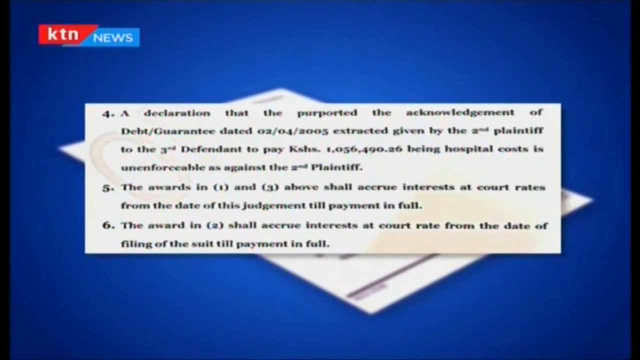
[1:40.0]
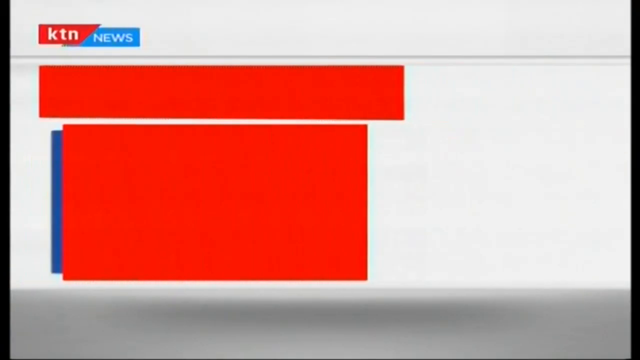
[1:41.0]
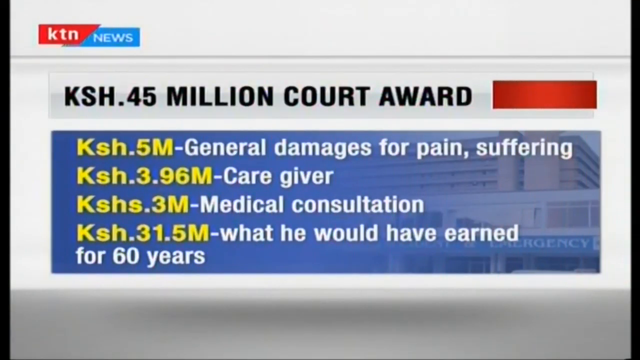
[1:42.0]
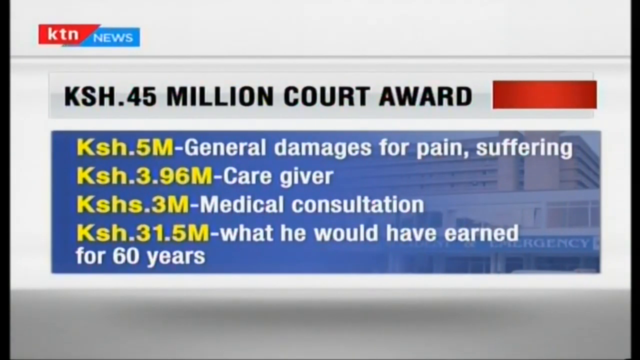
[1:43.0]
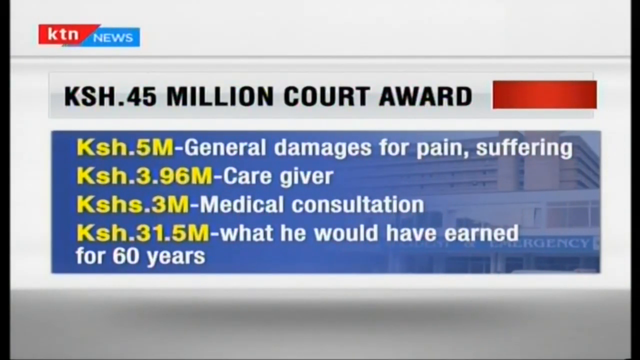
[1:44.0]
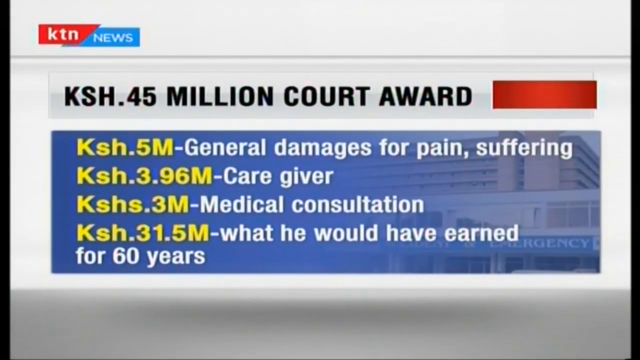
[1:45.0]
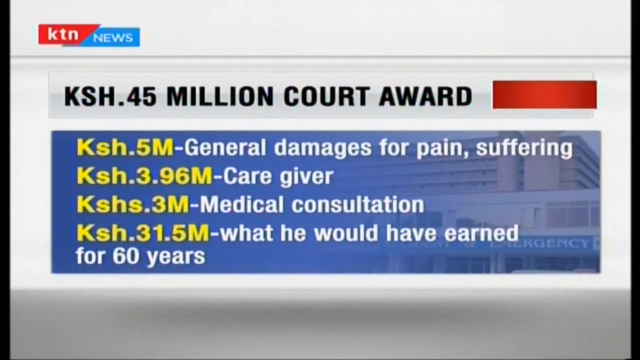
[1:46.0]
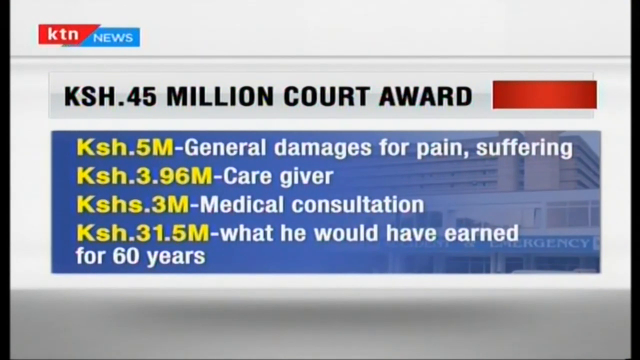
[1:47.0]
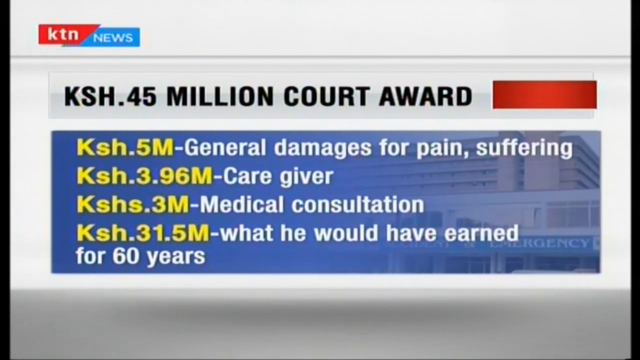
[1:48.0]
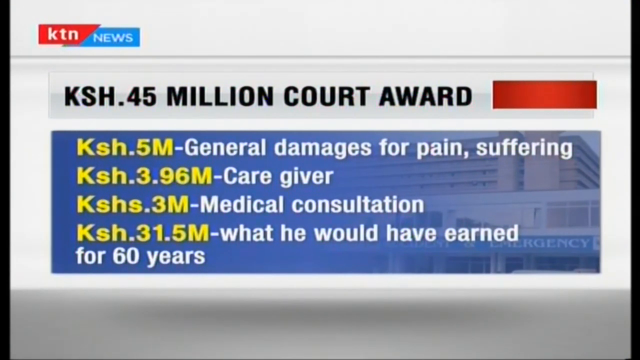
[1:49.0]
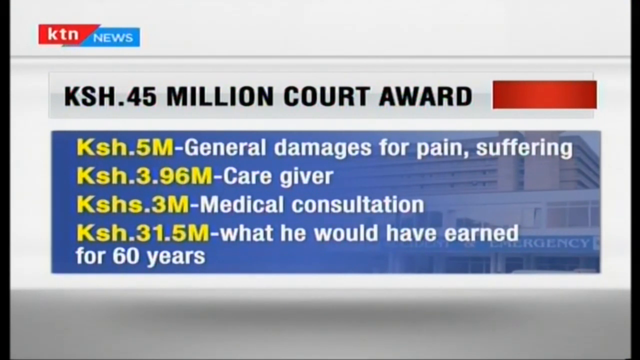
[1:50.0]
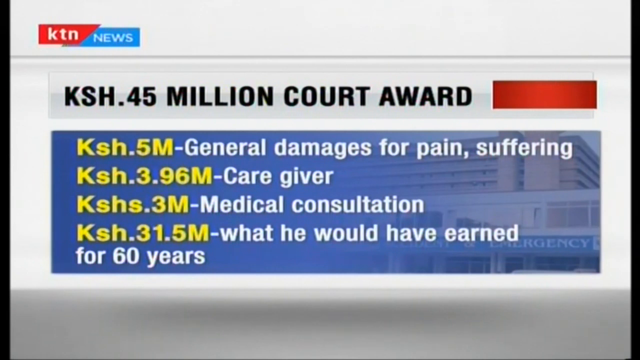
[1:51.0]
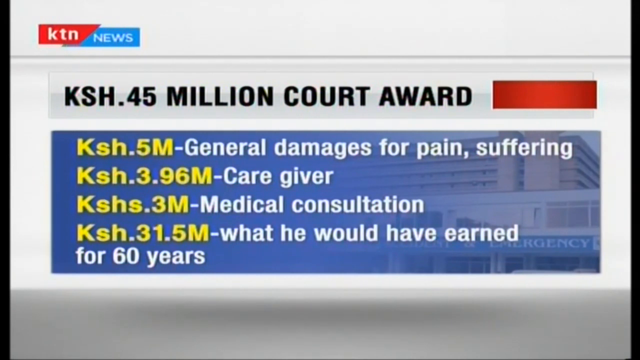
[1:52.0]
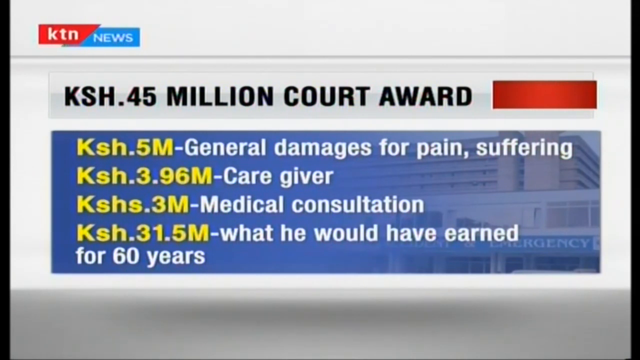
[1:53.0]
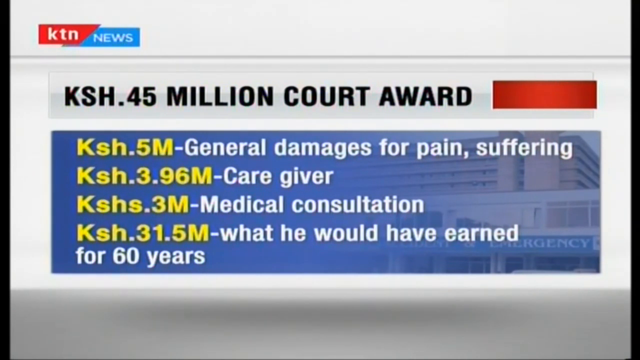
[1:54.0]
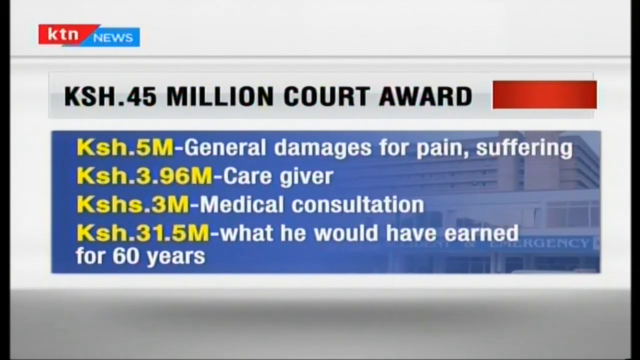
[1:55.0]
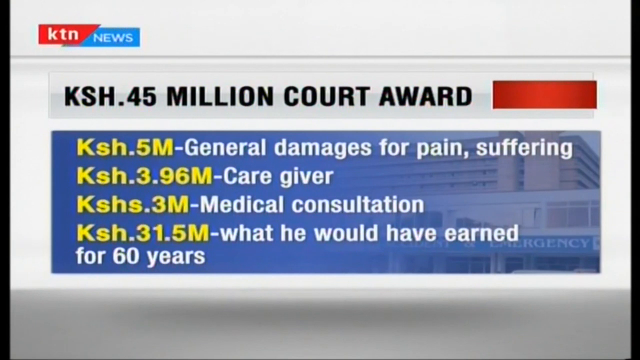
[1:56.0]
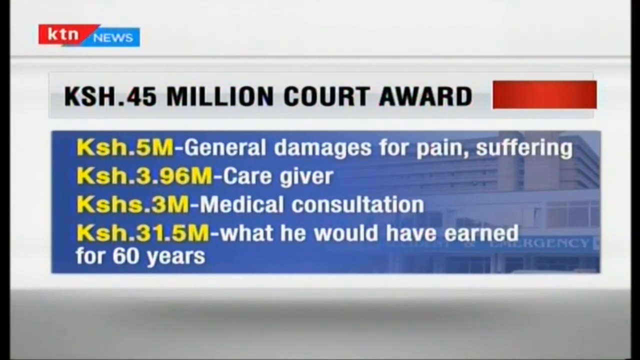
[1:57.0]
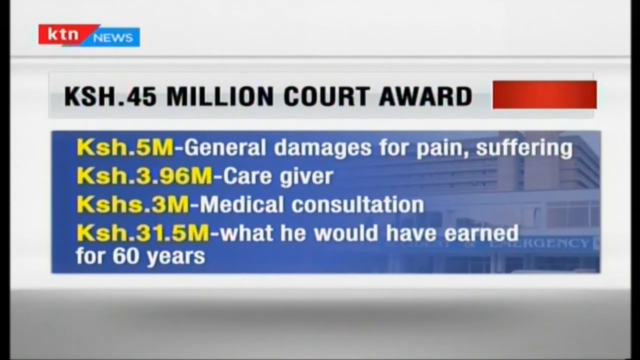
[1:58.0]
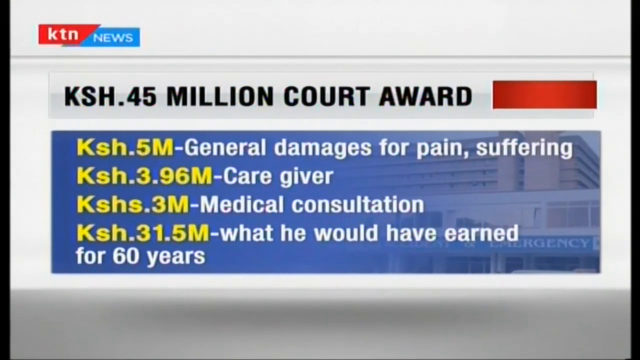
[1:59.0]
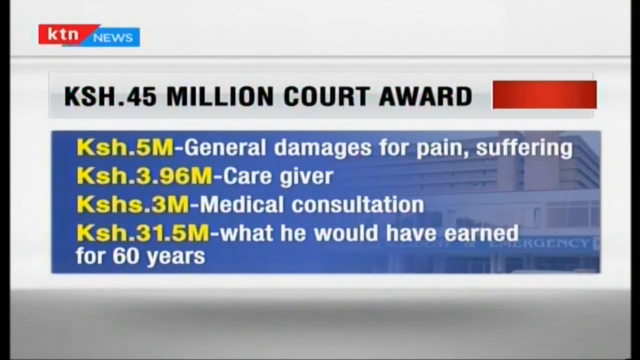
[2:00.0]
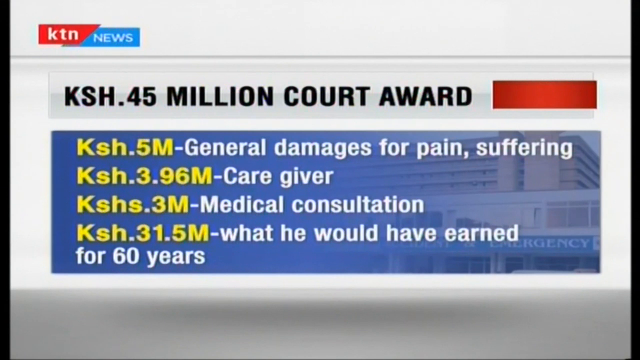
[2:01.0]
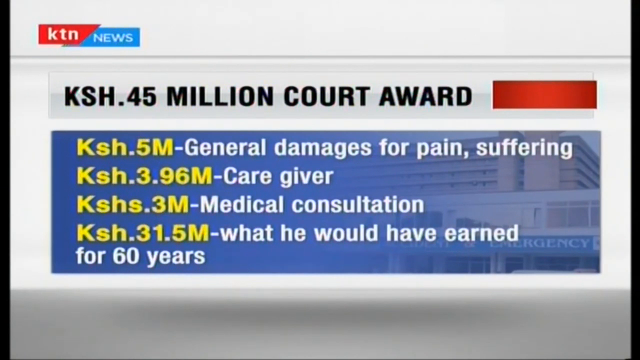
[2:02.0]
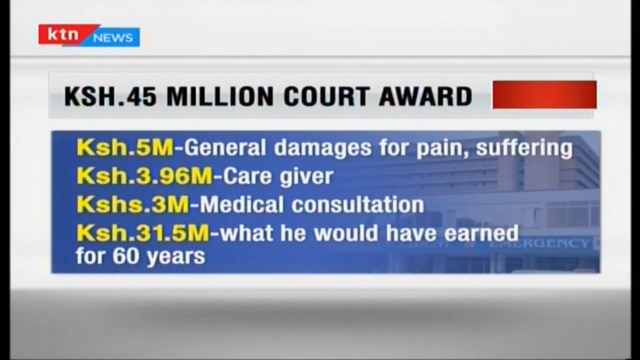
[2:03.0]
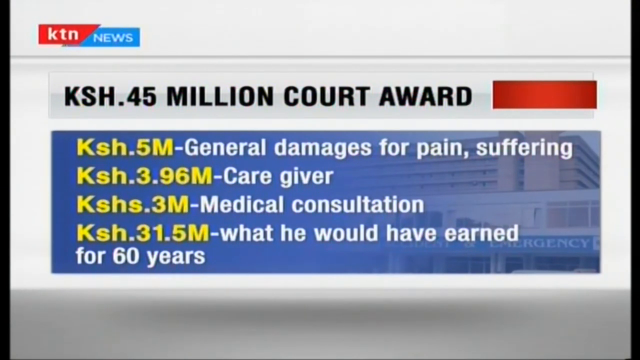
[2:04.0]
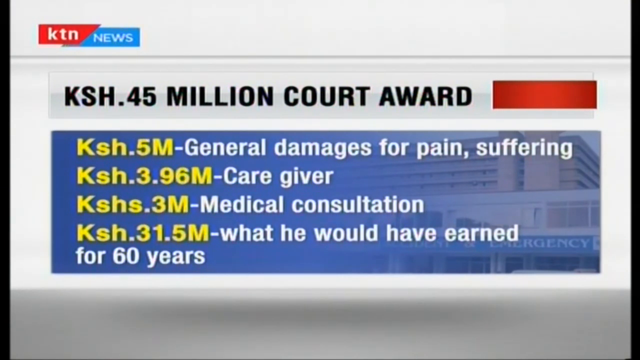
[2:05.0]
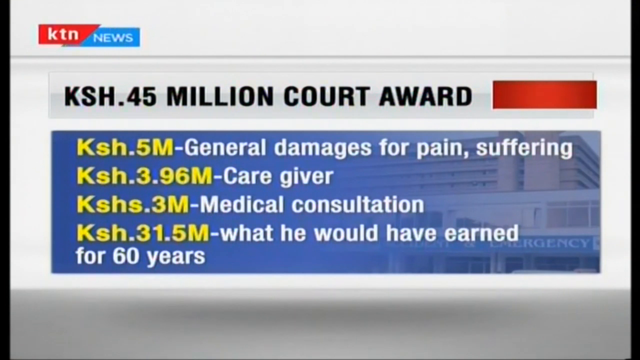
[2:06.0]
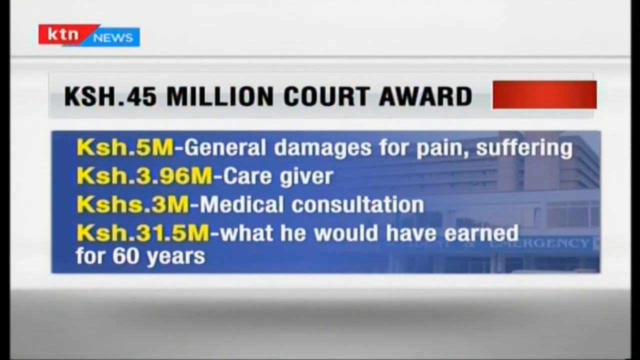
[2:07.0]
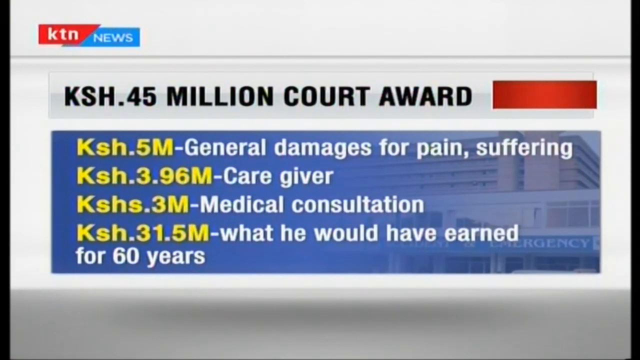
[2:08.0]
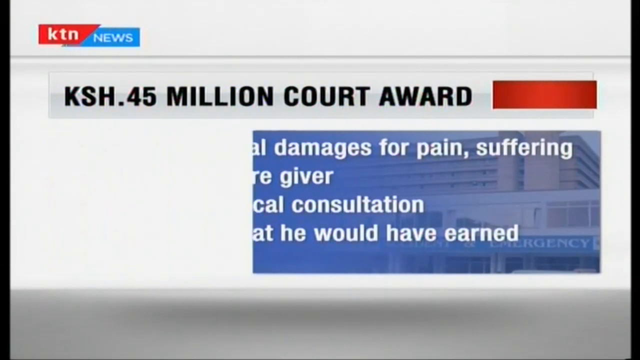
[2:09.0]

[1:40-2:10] A similar graphic with white and blue accents now has yellow headings showing how the 45 million KSH court award is broken down. The blue hospital image is still in the background. The breakdown shows 5 million KSH for general damages for pain and suffering, 3.96 million for giving care, 3 million for medical consultation, and 31.5 million for what he would have earned over 60 years. The infographic is minimal, using red, blue and white. A red, blue and white KTN News logo is in the top left corner, and a small red rectangle is next to the heading about the 45 million court award. The overall look is very plain.